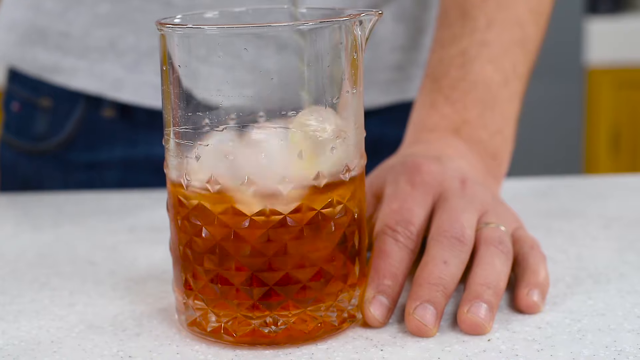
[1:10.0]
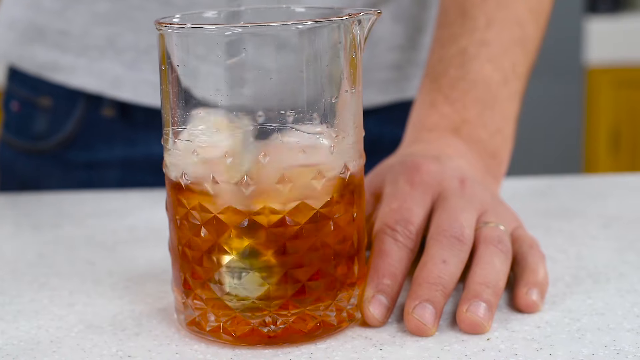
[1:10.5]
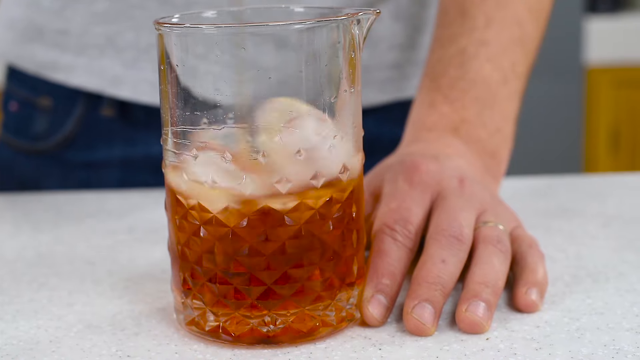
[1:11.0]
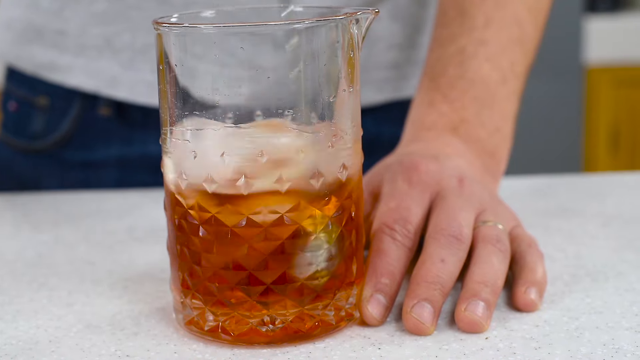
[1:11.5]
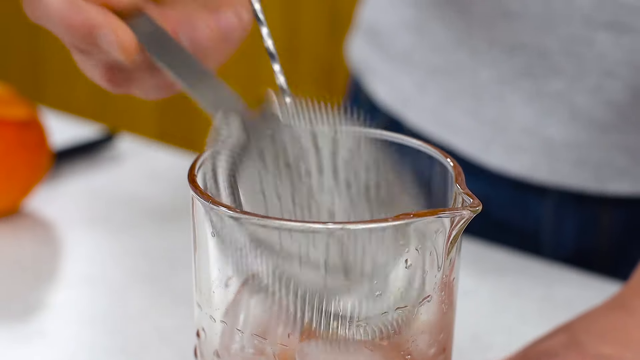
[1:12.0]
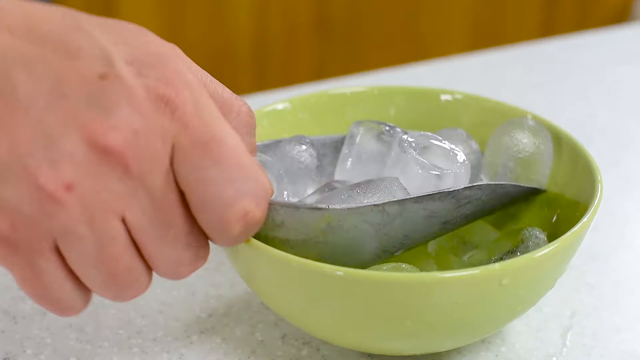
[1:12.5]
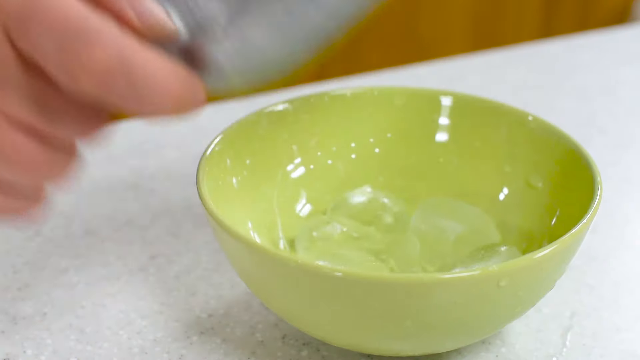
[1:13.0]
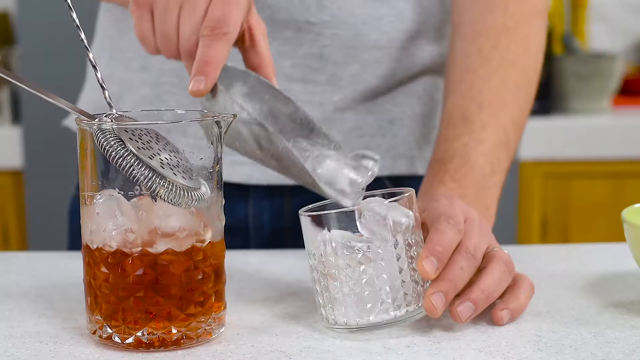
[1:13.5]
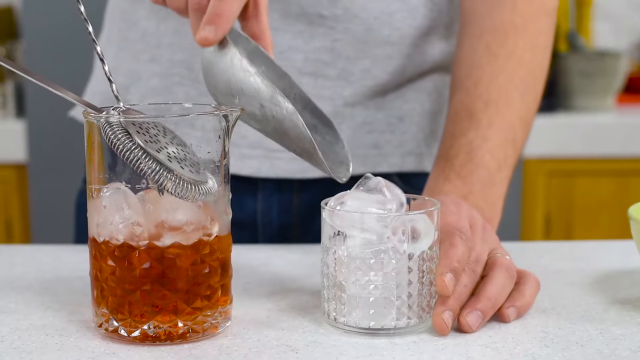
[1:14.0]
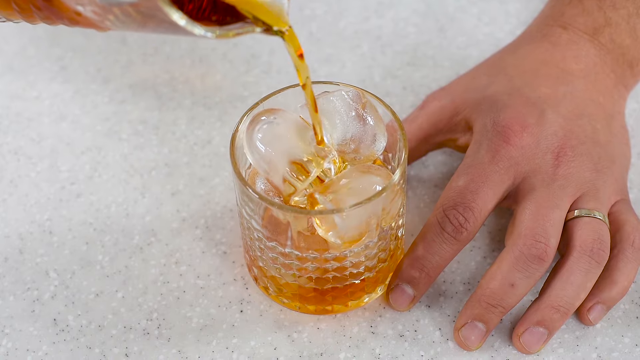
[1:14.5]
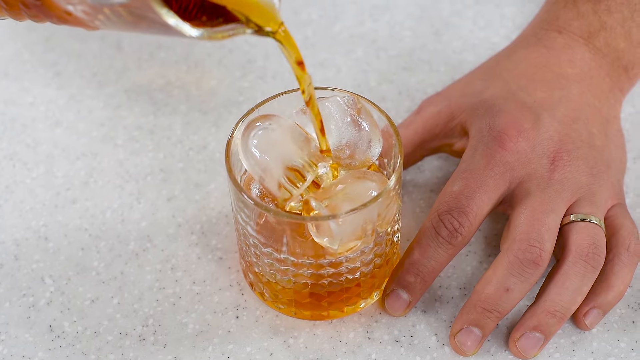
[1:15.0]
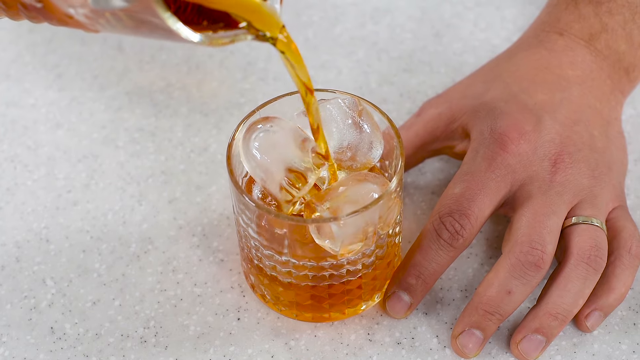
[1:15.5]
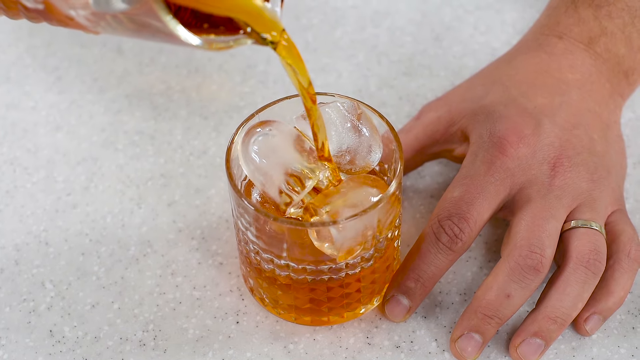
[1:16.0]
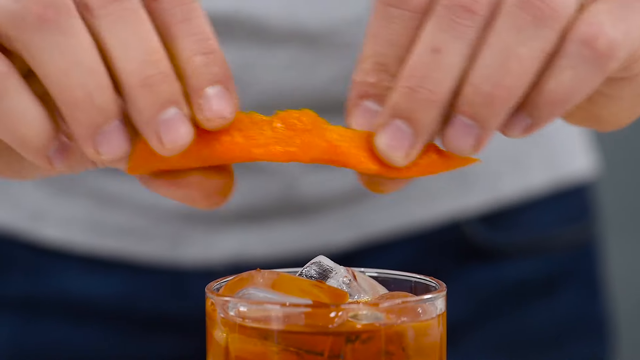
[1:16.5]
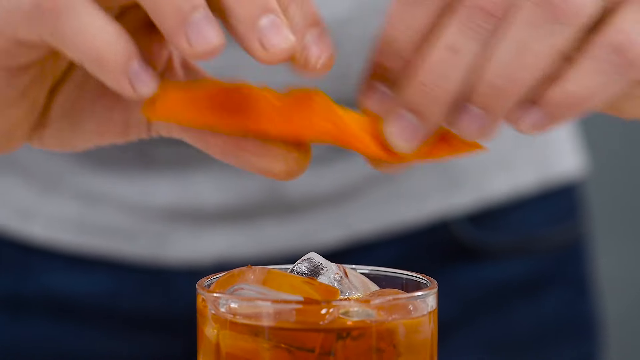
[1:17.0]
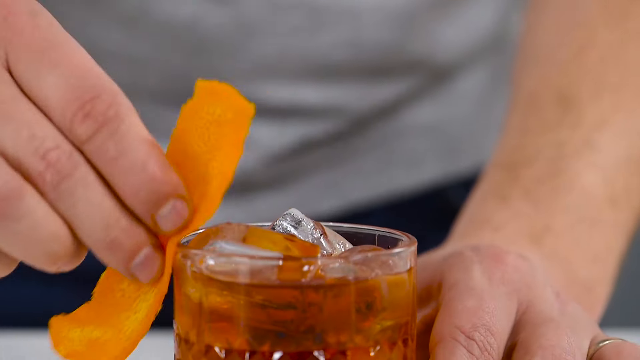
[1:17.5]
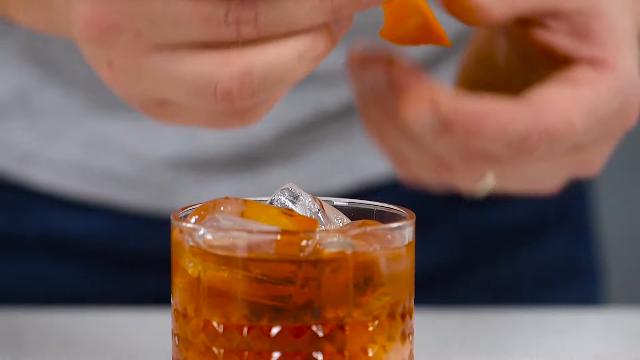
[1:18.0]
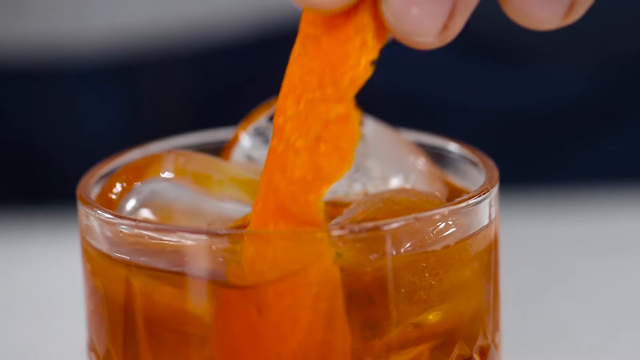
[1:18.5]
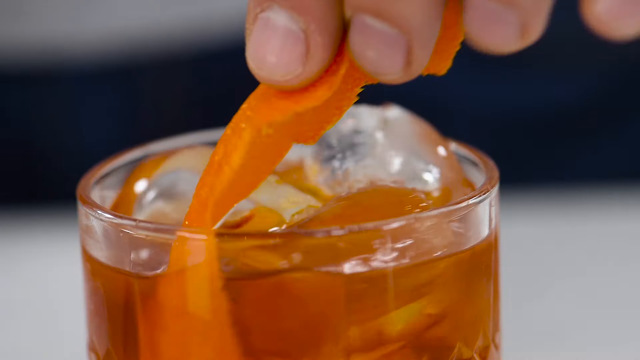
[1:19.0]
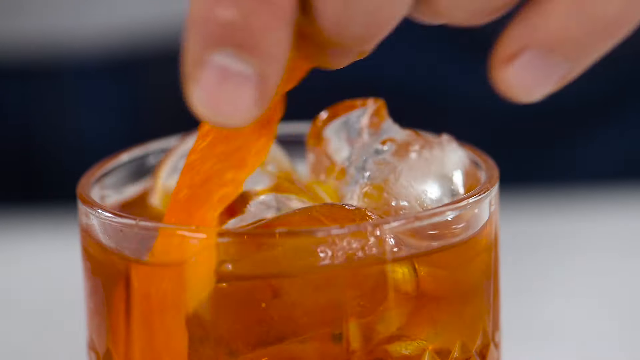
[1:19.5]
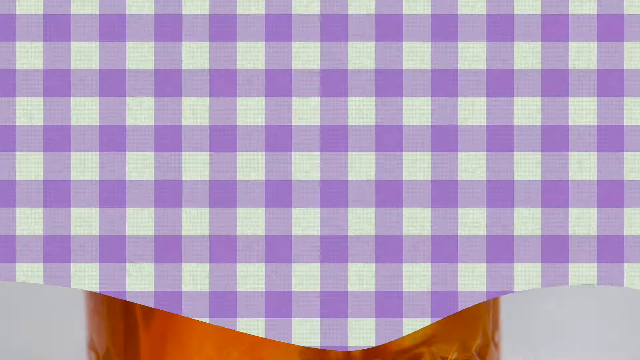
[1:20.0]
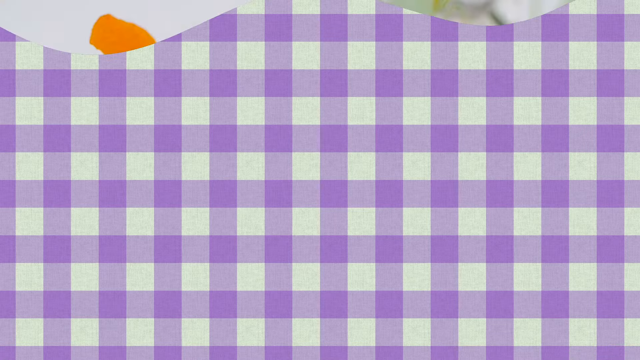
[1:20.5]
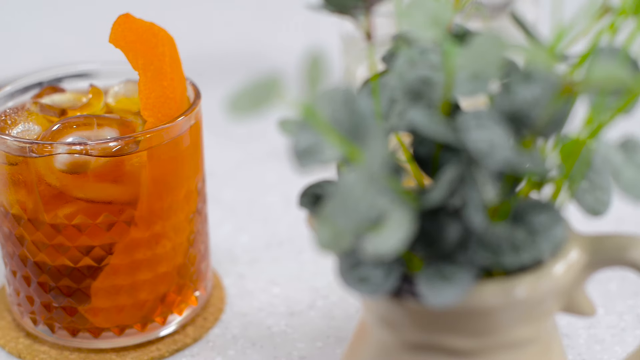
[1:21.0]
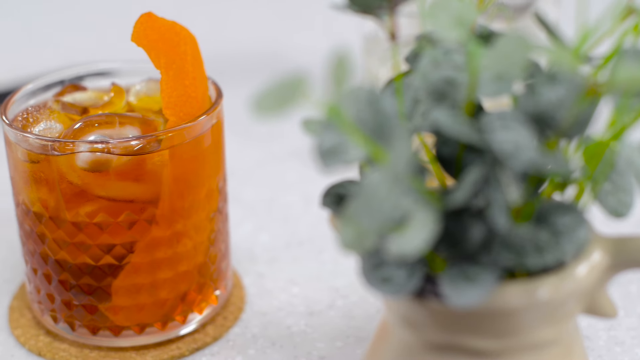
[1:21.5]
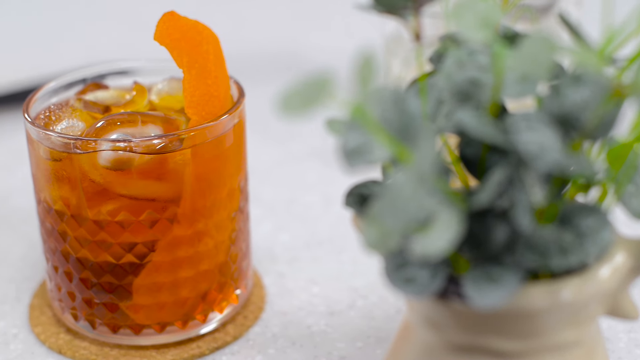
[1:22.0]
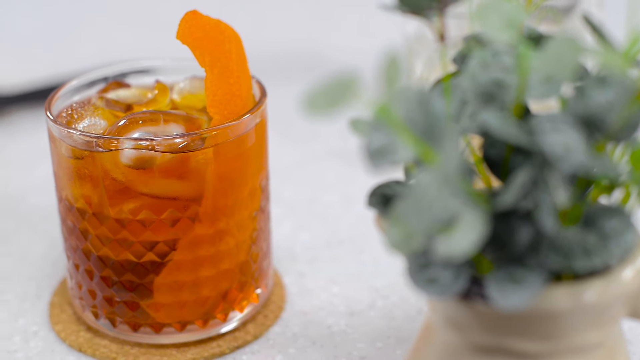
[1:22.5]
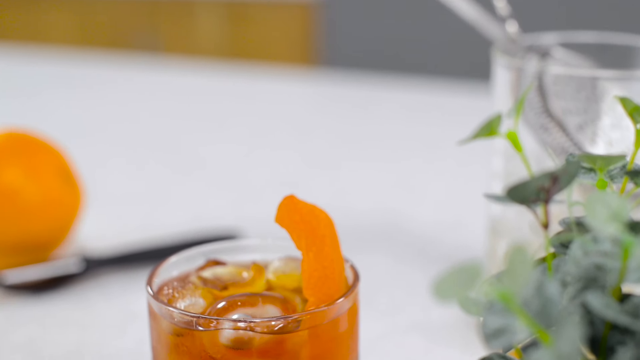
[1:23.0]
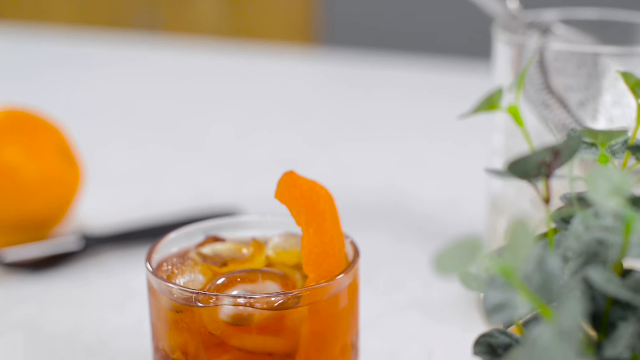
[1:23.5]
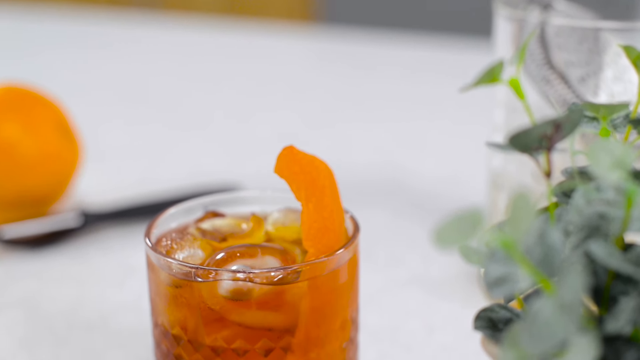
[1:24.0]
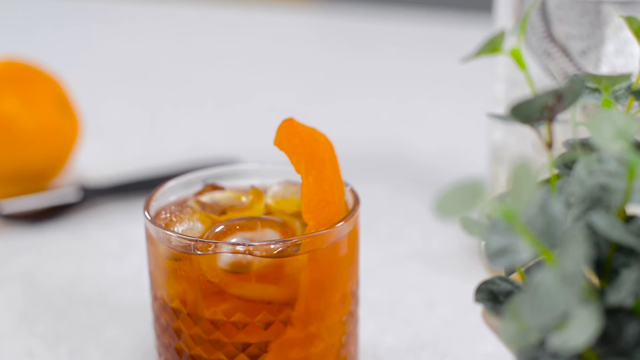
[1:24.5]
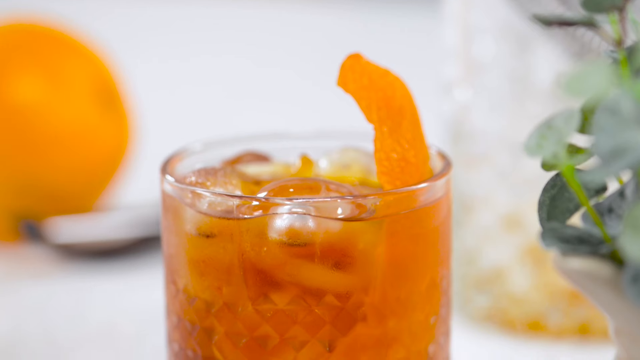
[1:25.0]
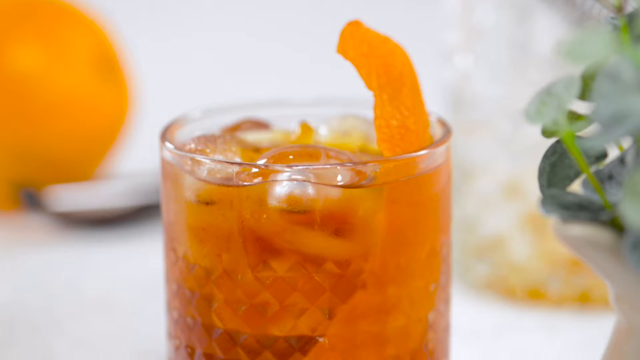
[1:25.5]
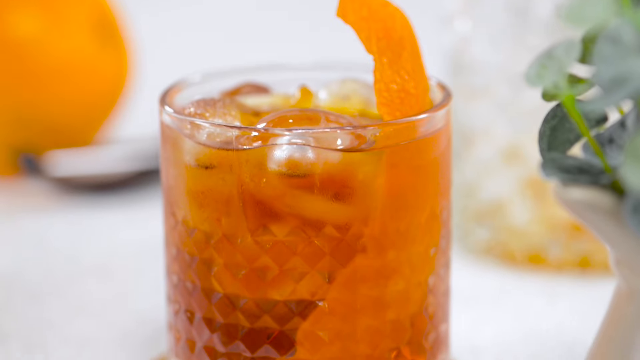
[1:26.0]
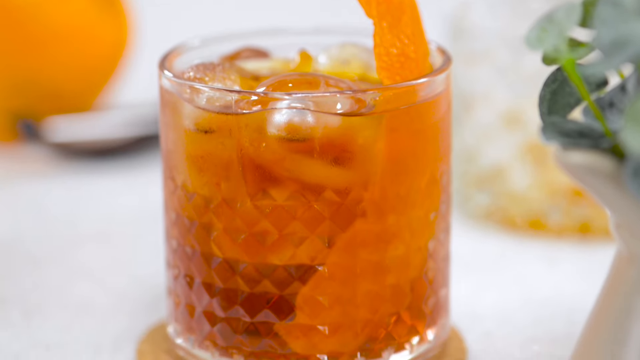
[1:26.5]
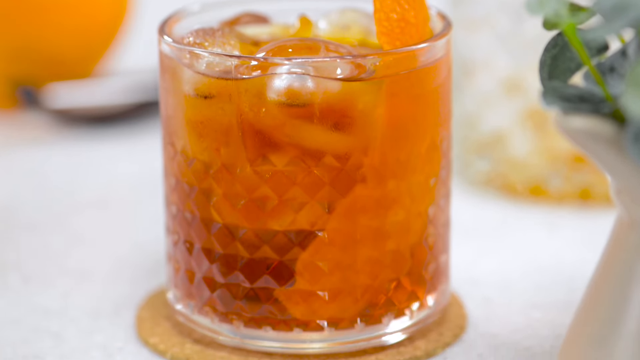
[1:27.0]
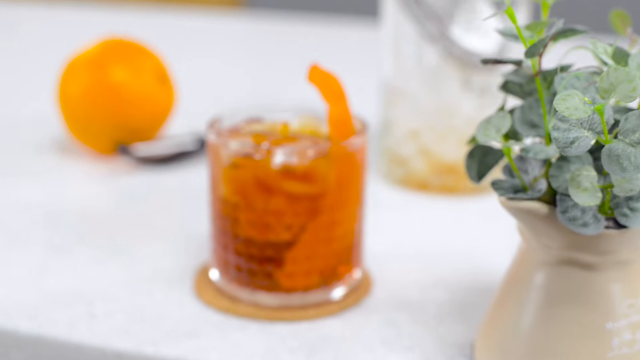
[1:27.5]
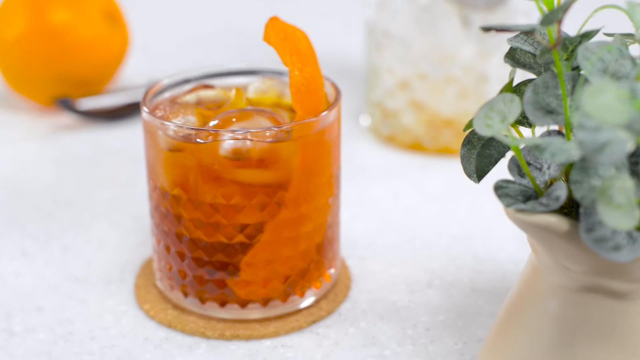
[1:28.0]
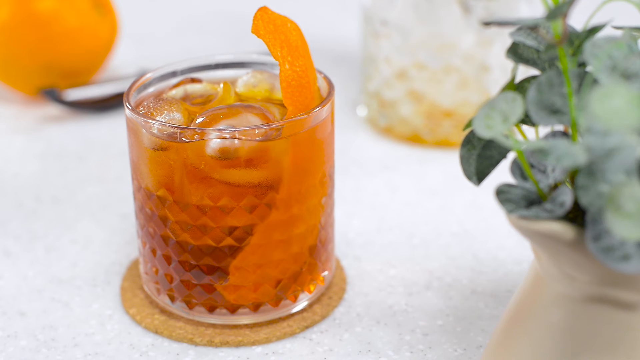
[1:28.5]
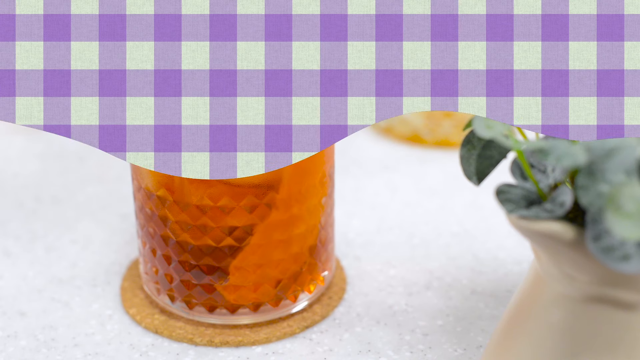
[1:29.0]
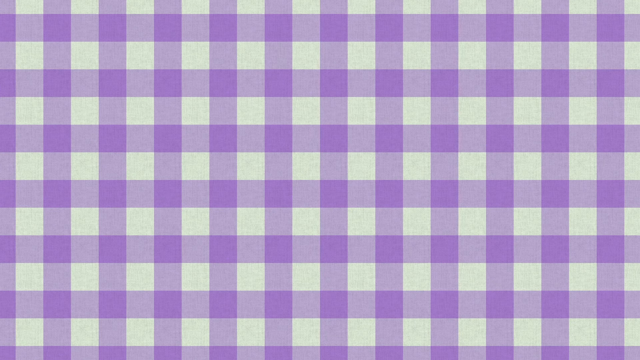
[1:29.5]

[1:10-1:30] A strainer descends into a beaker. The video cuts to a hand with an ice scooper taking ice out of a green bowl, then a short shot of the ice going into a glass. Brown liquid is poured into the glass with ice. A bit of orange peel is held over the glass, rubbed against the rim of the glass, and then carefully placed into the glass with the drink. One shot of the cocktail pans from right to left, another pans from top to bottom, and another pans from top to bottom in close-up. Then the camera zooms in on the cocktail; to the side of the drink is a plant, and in the background there looks to be a picture of ice and another orange.